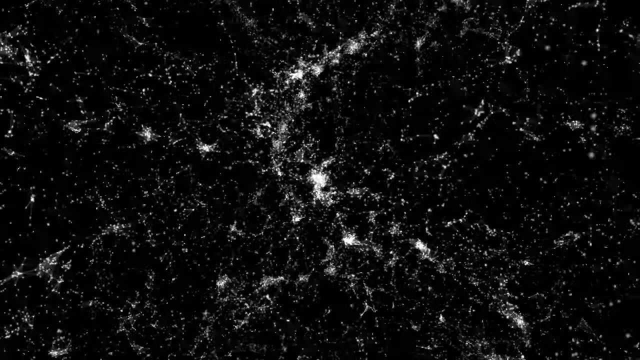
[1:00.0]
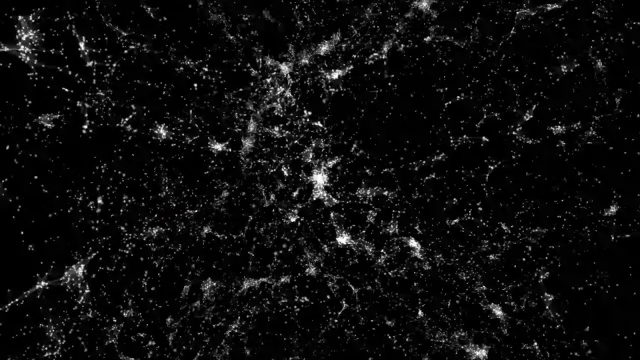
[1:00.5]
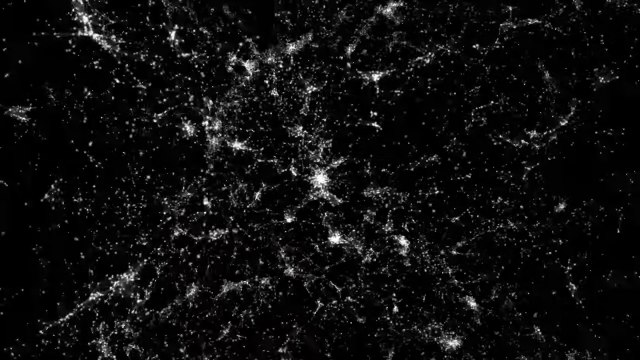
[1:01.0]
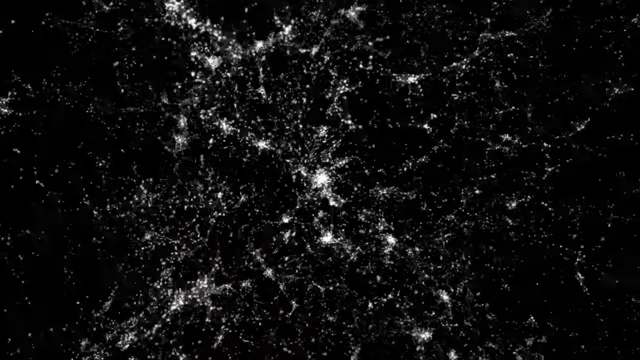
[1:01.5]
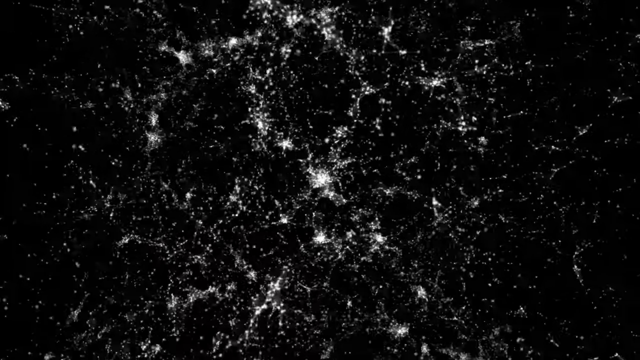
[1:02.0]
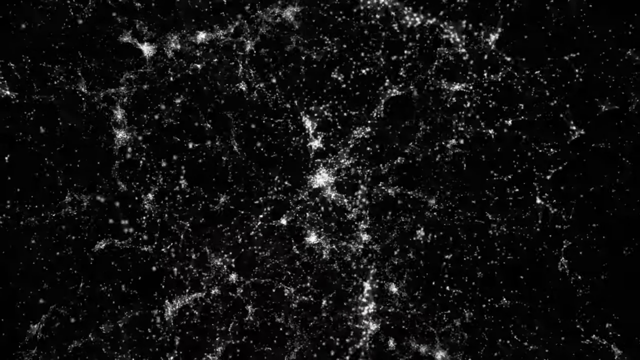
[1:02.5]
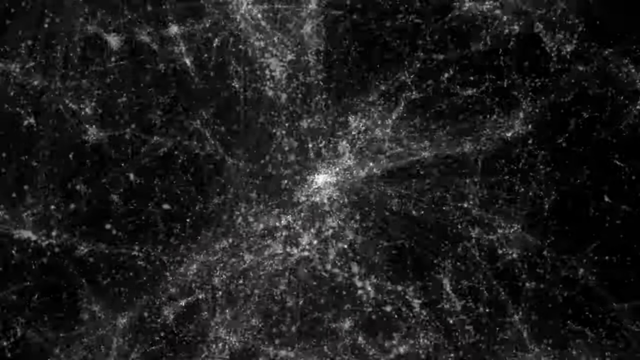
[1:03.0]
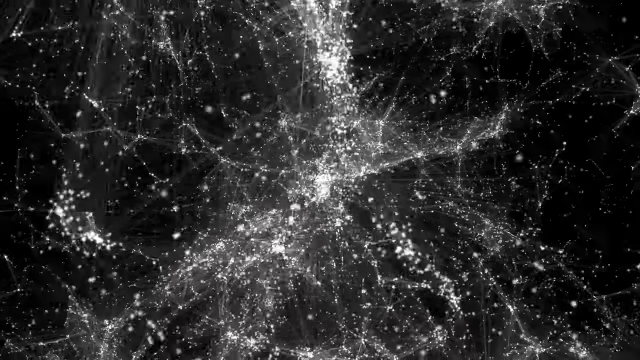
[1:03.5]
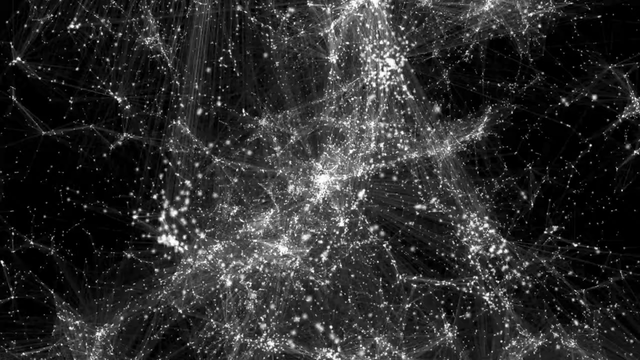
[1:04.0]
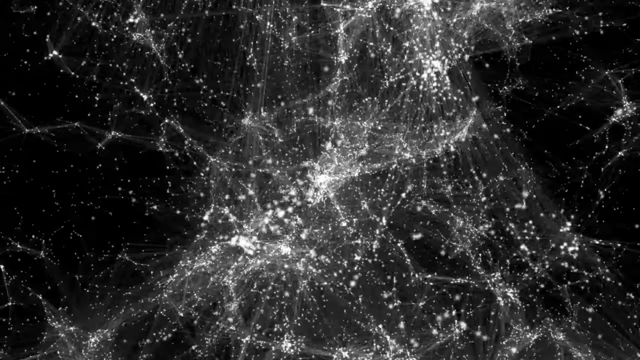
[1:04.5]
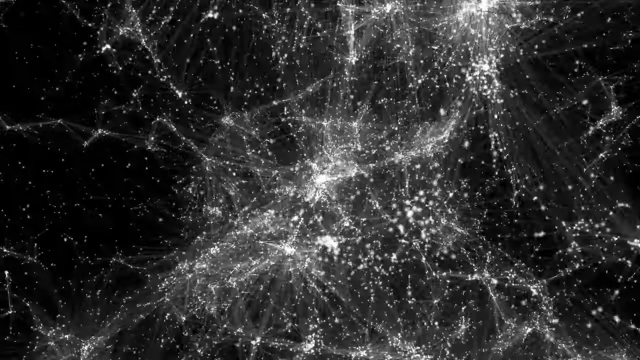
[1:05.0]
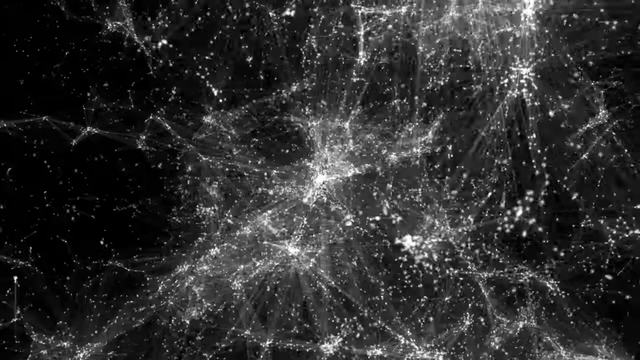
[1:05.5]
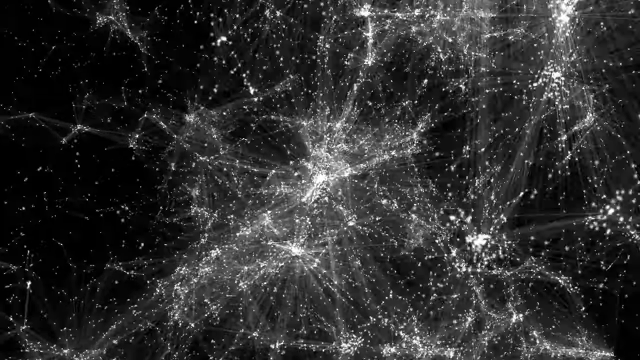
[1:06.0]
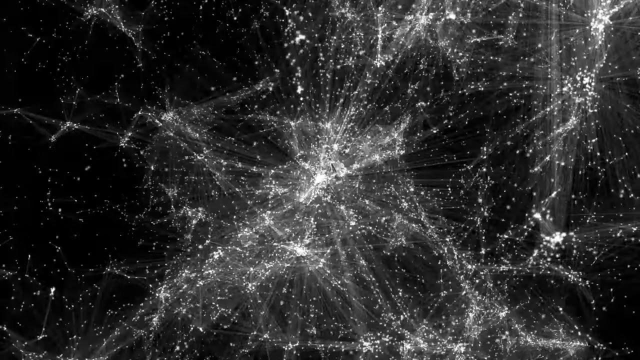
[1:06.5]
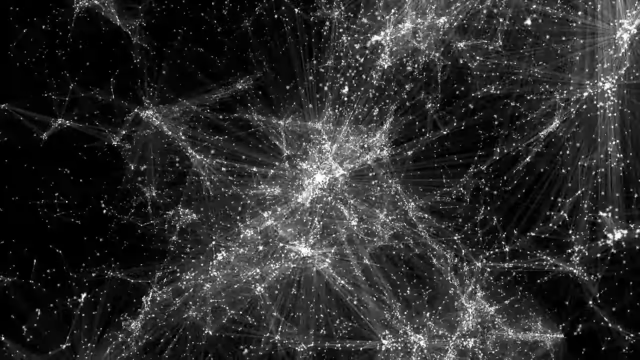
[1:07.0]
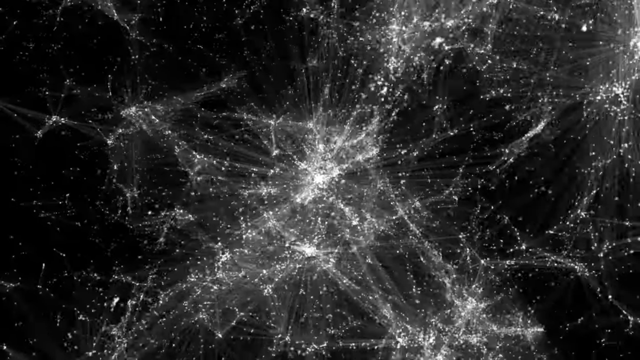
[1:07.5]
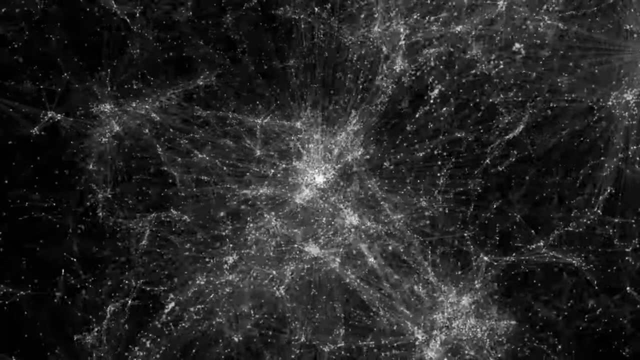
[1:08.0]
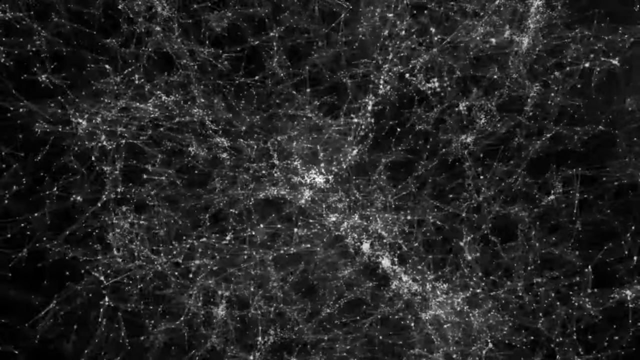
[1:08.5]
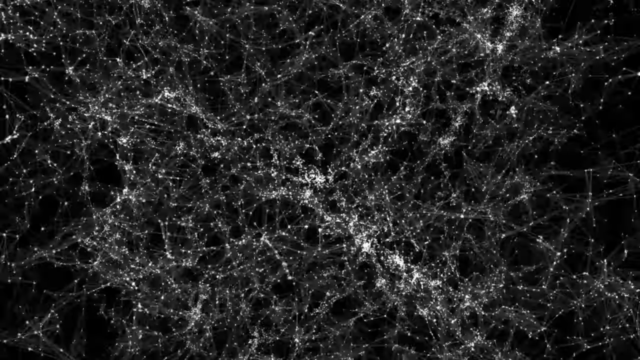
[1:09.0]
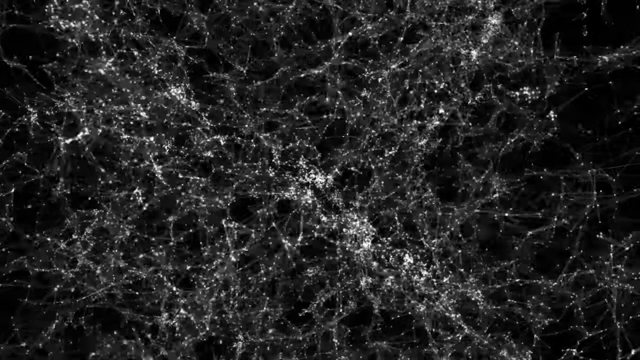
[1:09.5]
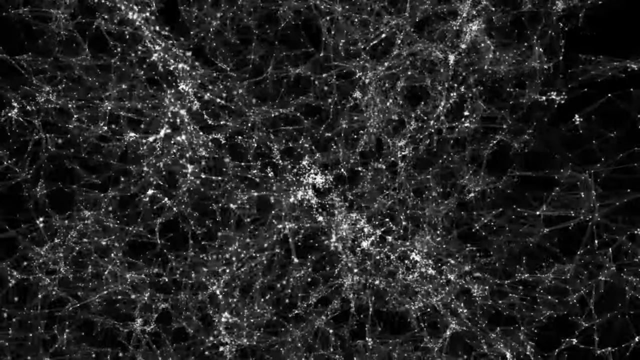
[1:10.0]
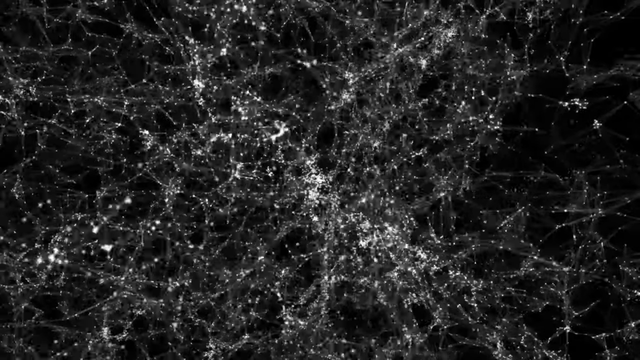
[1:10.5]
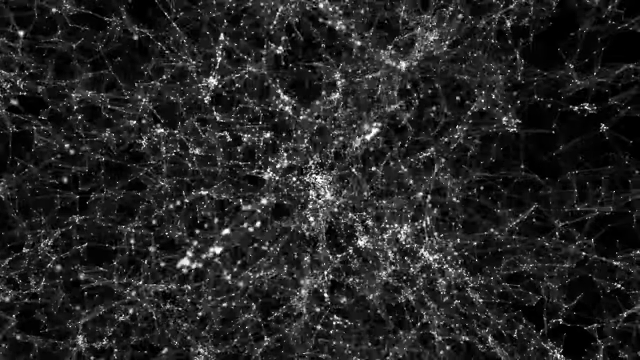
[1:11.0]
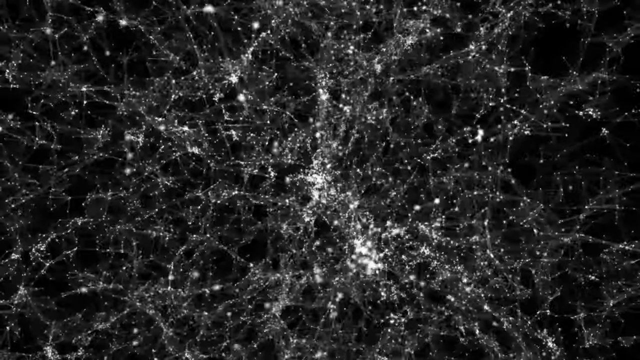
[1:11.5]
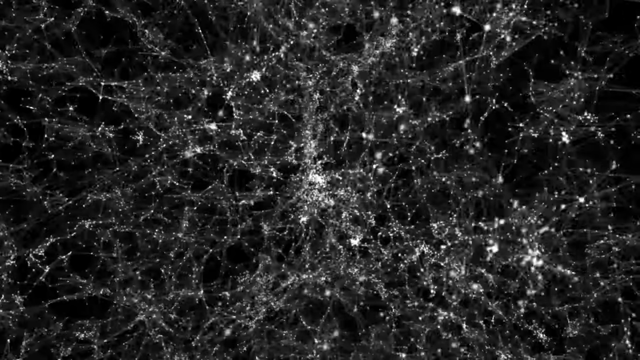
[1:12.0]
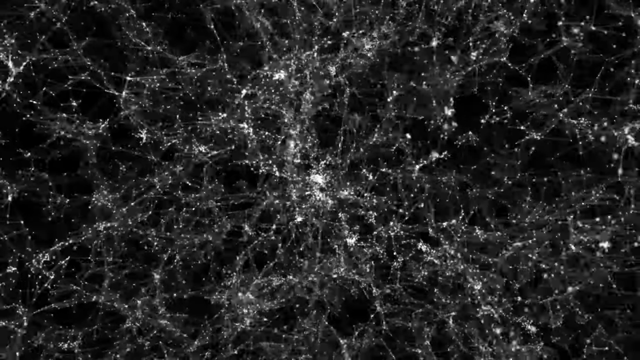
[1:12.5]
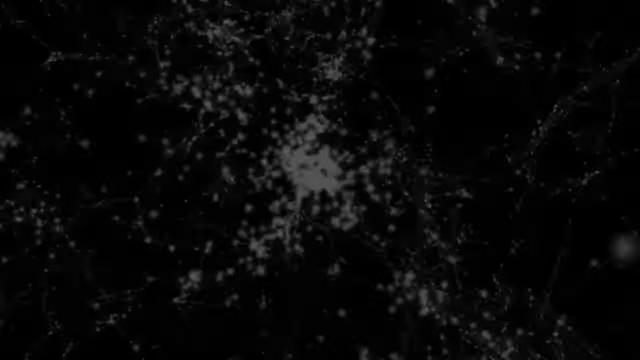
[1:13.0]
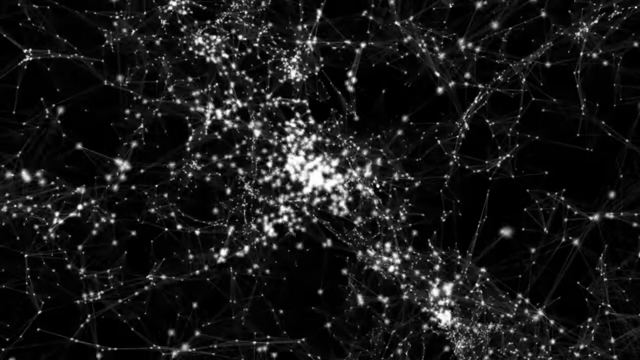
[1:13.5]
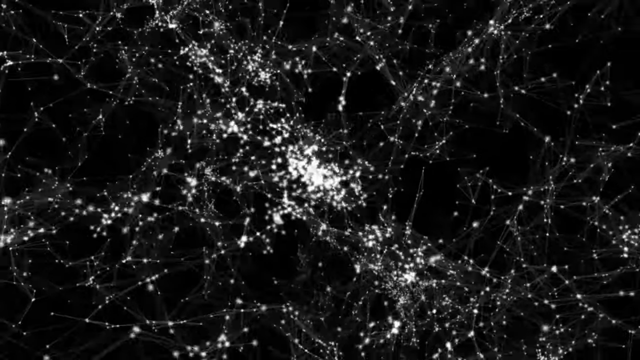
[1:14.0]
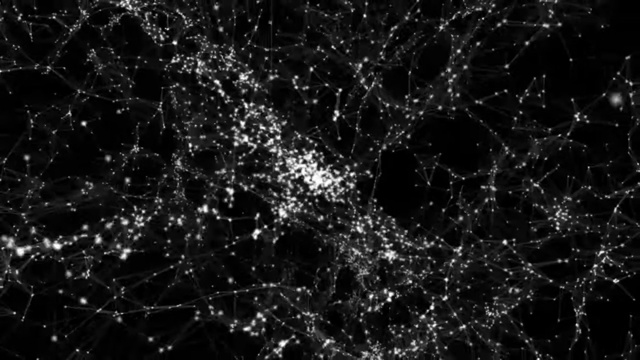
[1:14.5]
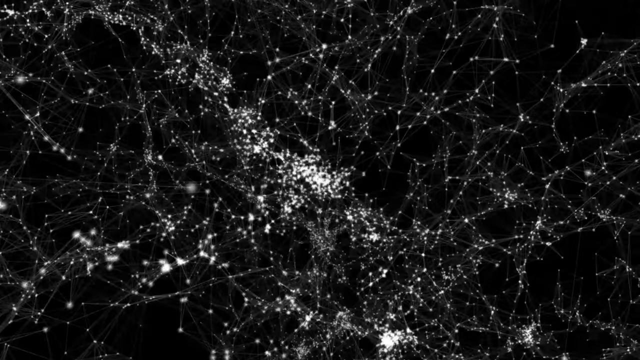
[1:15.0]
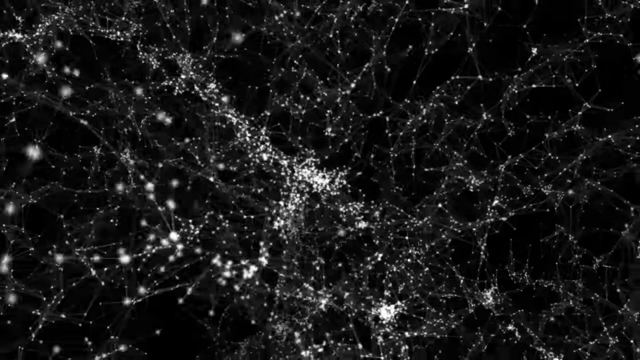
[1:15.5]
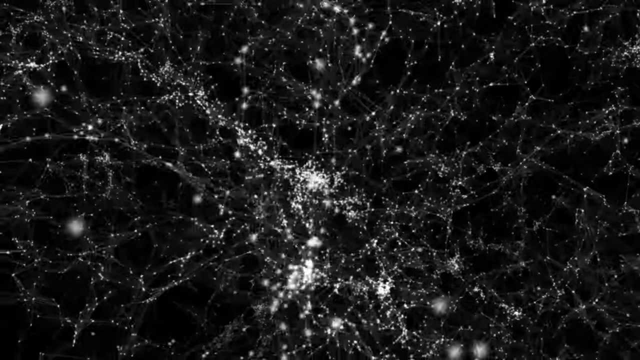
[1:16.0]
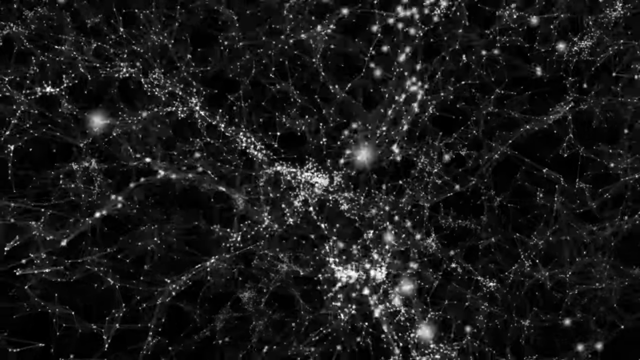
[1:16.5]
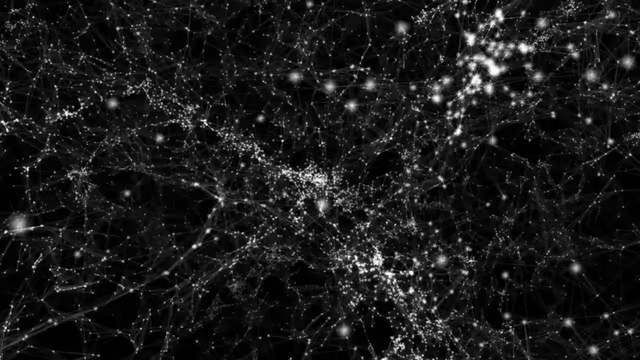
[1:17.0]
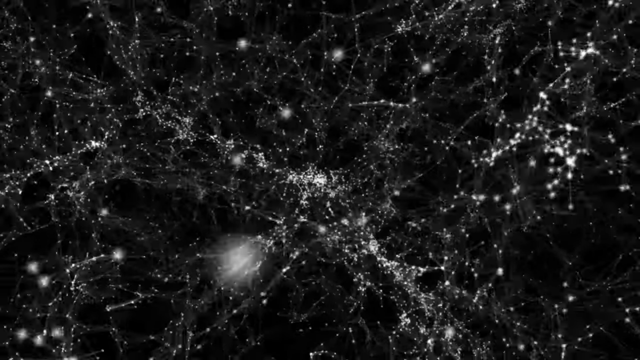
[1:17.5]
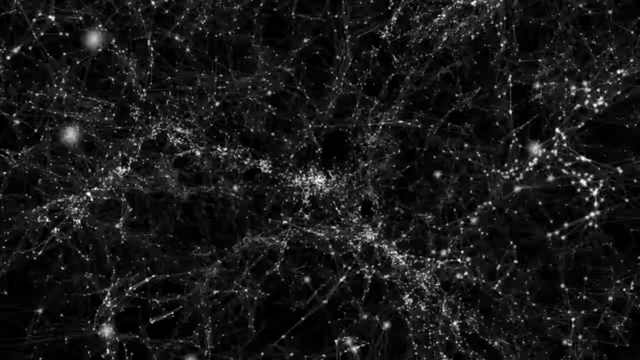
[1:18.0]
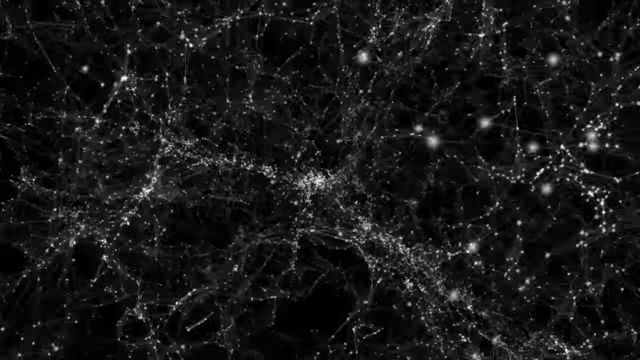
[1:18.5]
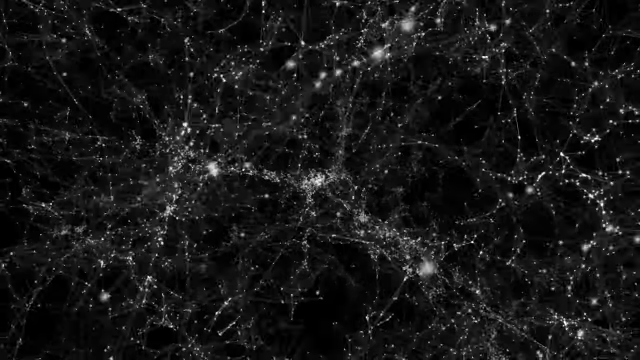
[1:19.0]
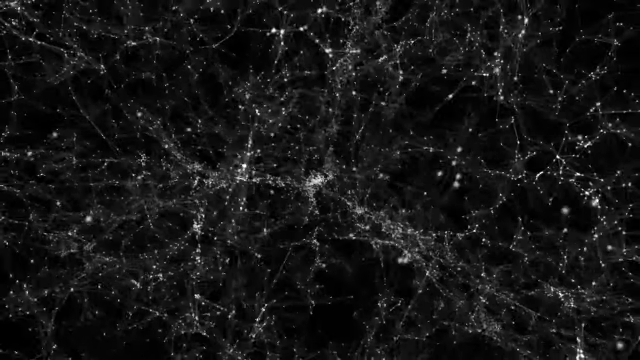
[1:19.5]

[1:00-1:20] On a black background, a mass of white dots appears as the view kind of circulates and spins around in a circle. Some clusters of dots are all connected with each other, and the view fades into a much brighter cluster of white dots with a bit of haze surrounding them. The view continues to circle, showing more connected white lines of dots that almost give a web appearance, and it keeps spinning. It then transitions to another screen showing more white dots in clusters and in lines, with the camera moving out to reveal more of these clusters and lines. Some areas have more clusters and white specks than others.